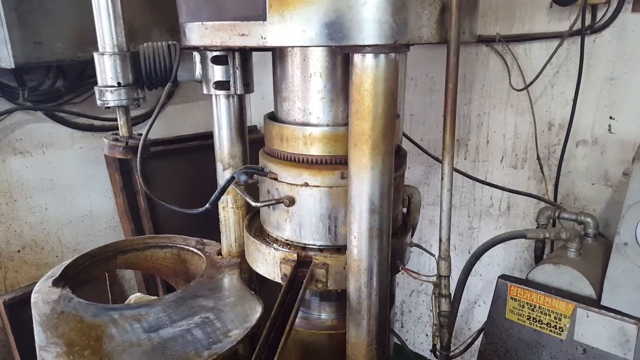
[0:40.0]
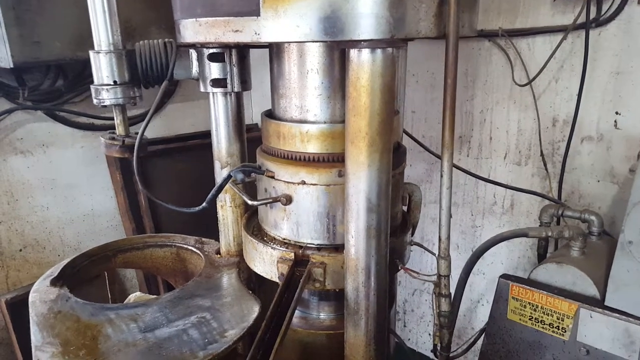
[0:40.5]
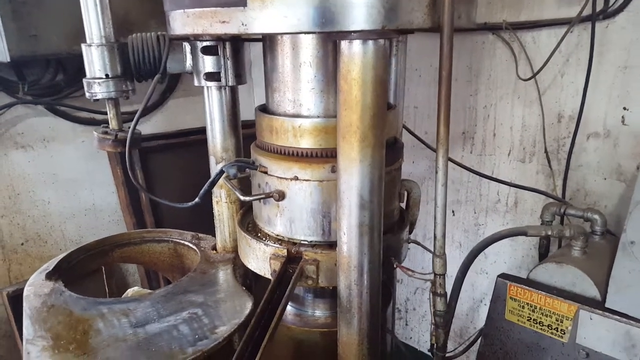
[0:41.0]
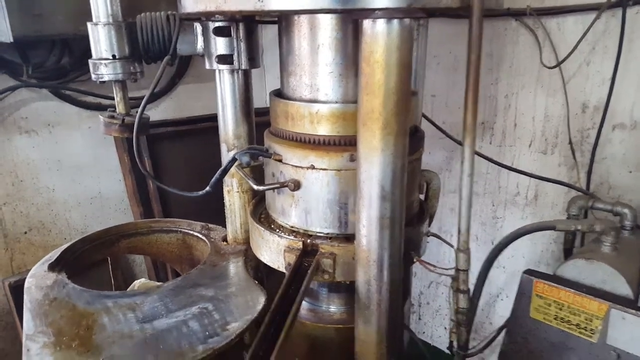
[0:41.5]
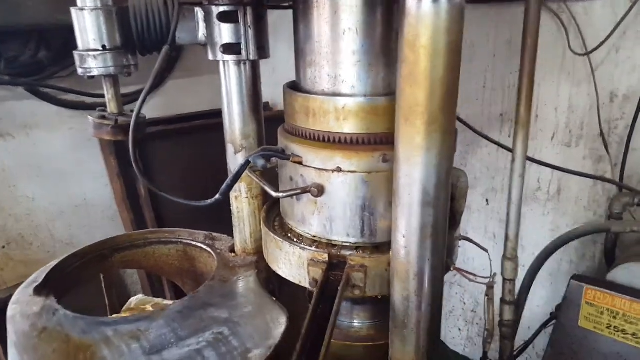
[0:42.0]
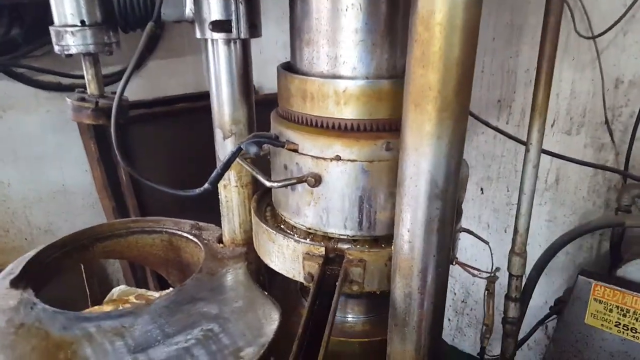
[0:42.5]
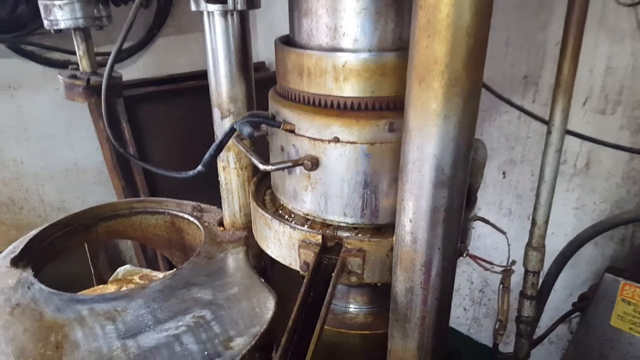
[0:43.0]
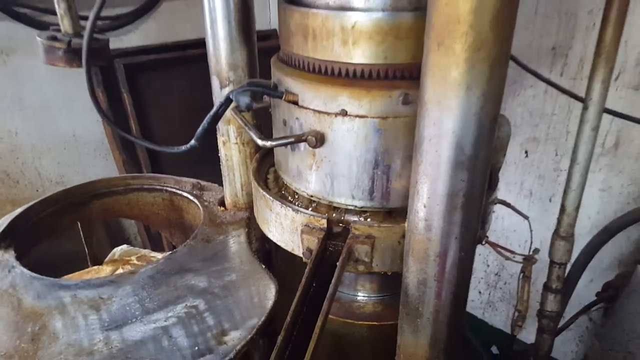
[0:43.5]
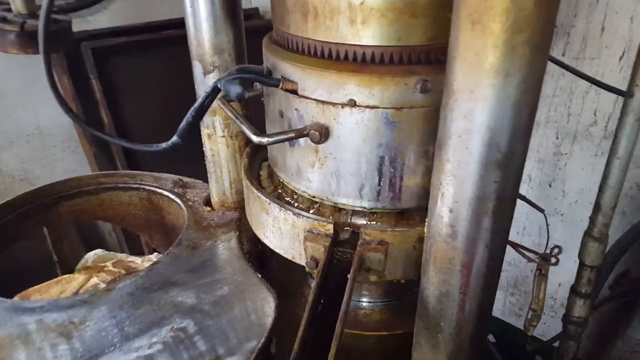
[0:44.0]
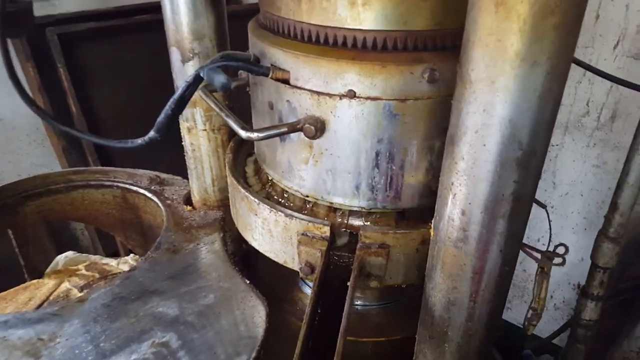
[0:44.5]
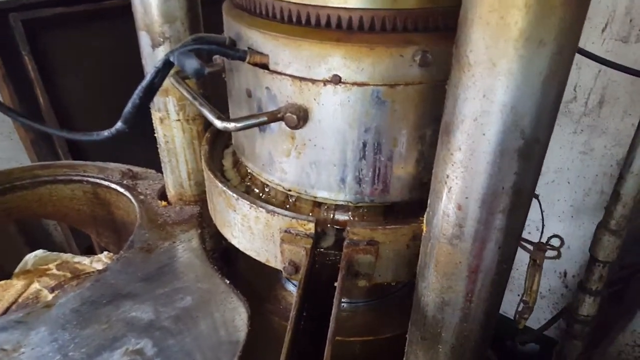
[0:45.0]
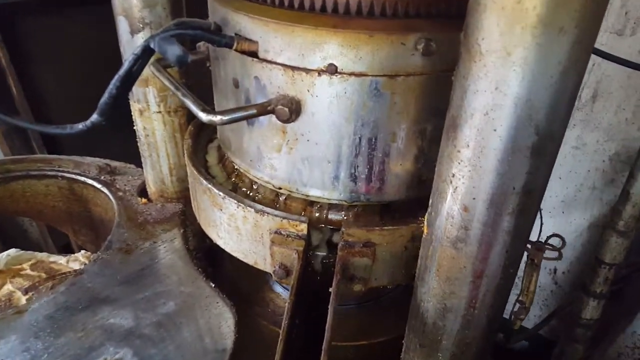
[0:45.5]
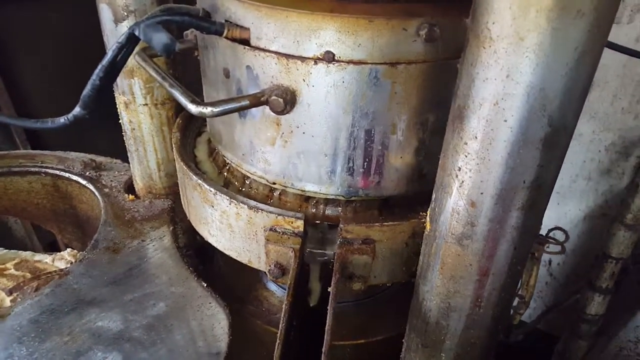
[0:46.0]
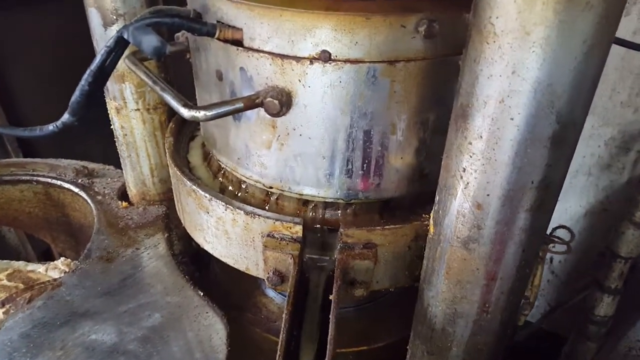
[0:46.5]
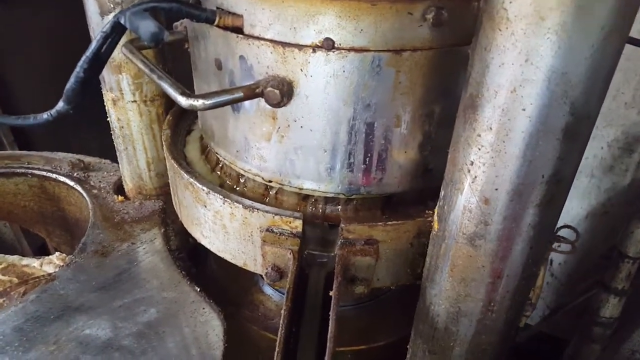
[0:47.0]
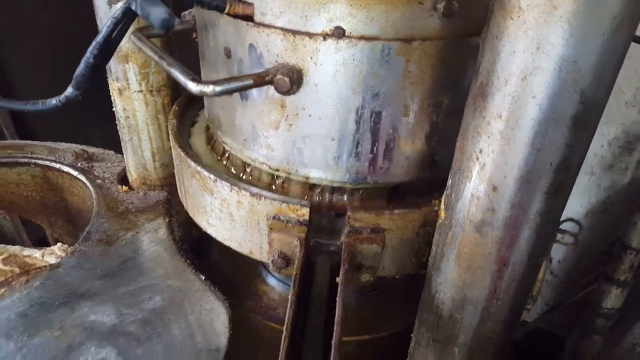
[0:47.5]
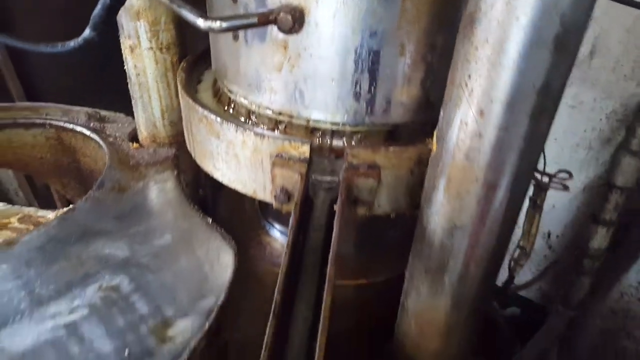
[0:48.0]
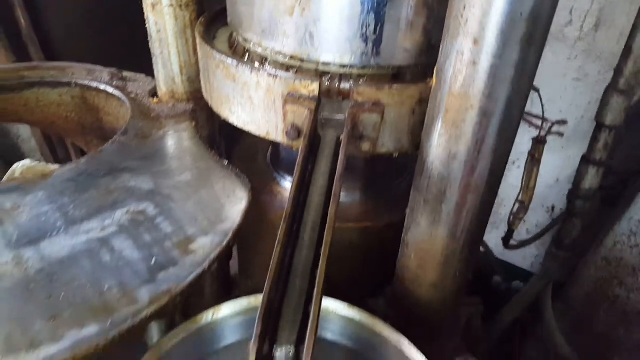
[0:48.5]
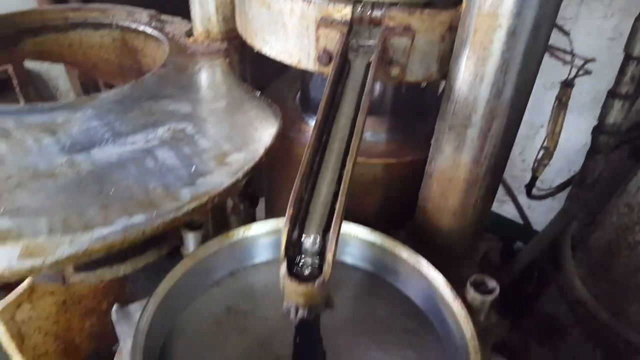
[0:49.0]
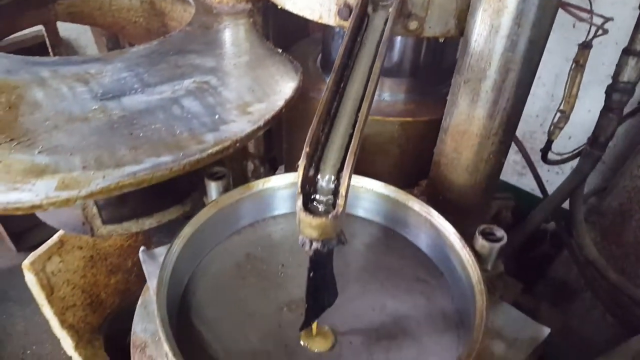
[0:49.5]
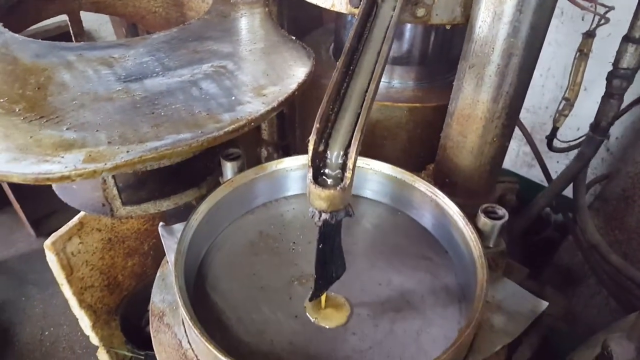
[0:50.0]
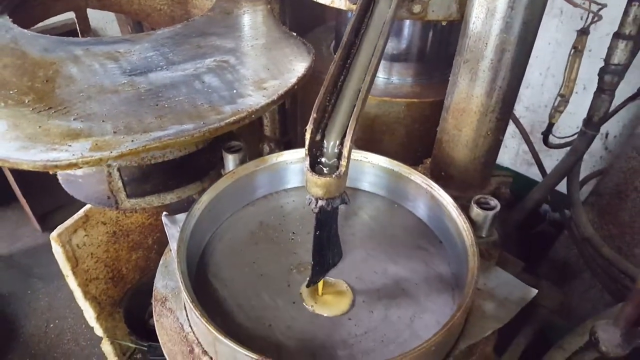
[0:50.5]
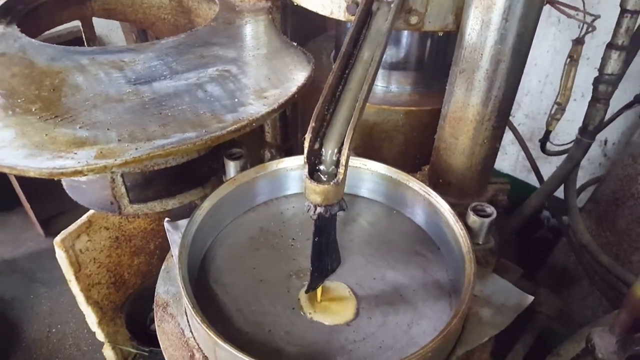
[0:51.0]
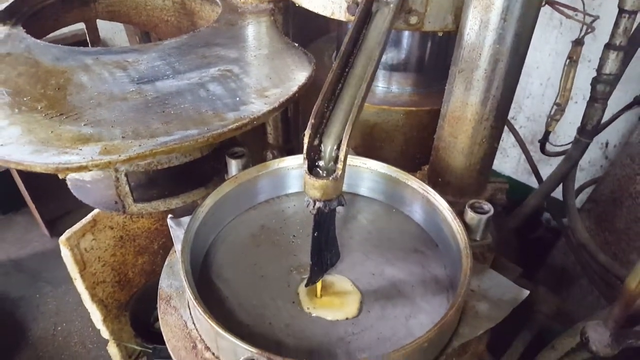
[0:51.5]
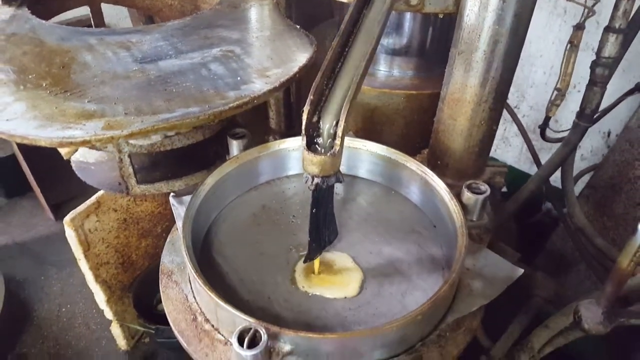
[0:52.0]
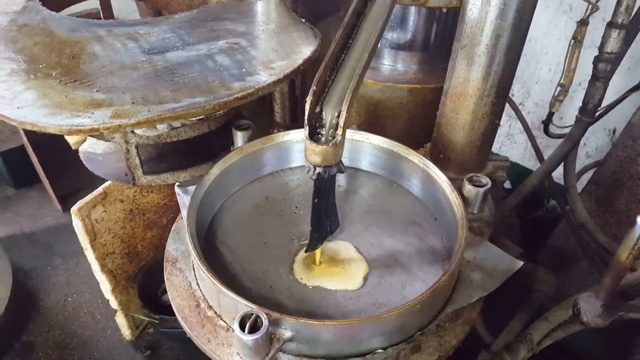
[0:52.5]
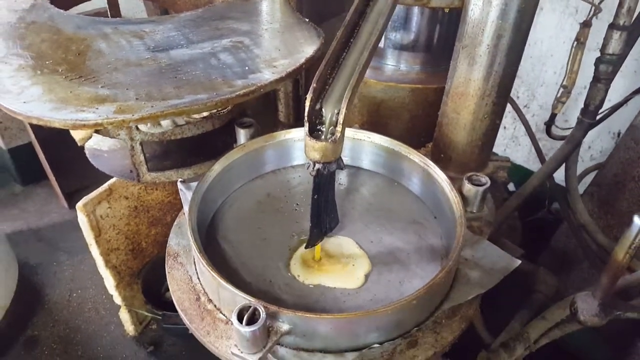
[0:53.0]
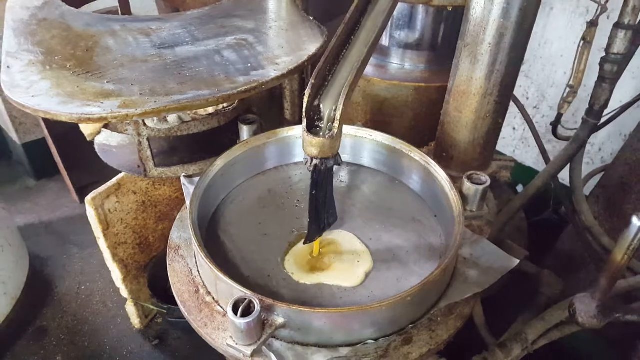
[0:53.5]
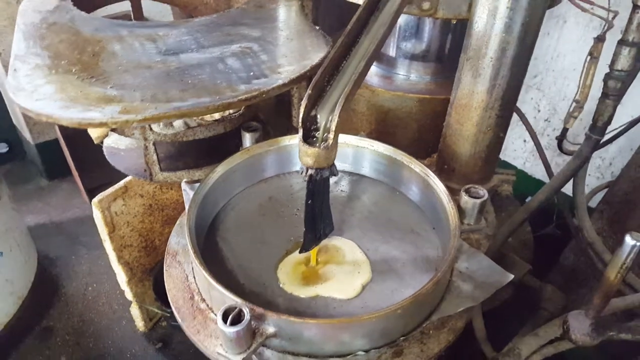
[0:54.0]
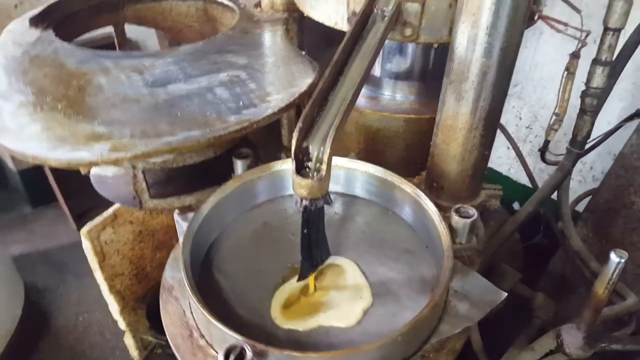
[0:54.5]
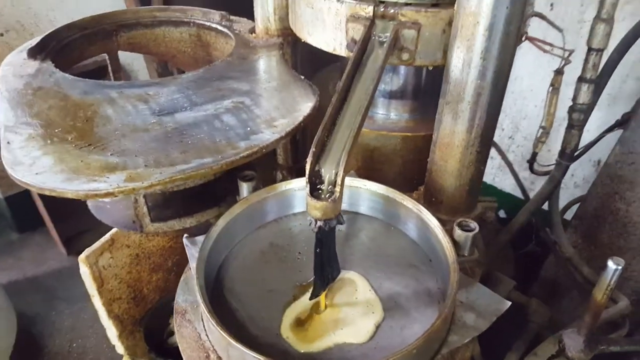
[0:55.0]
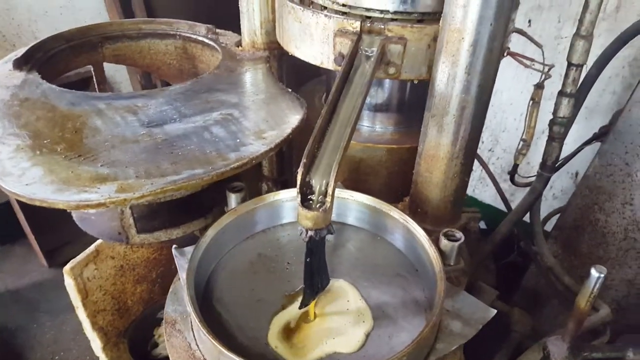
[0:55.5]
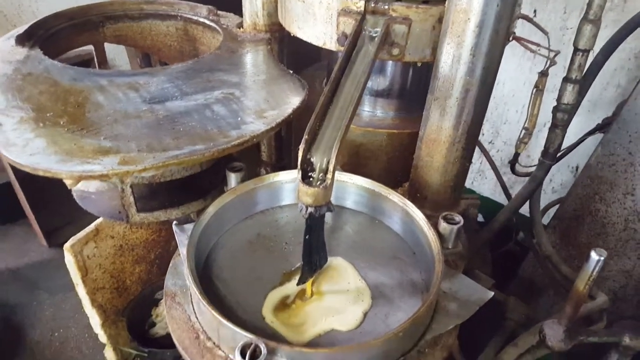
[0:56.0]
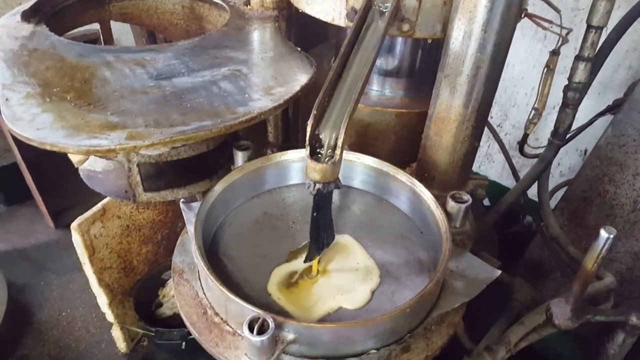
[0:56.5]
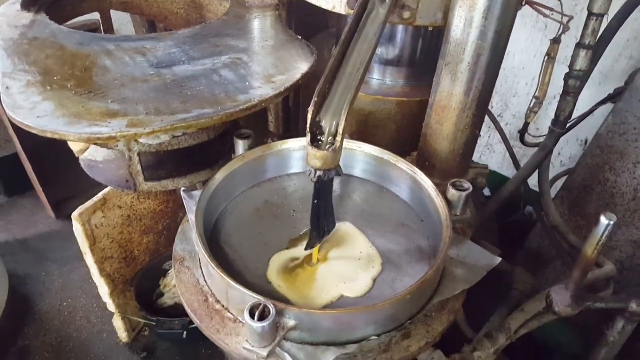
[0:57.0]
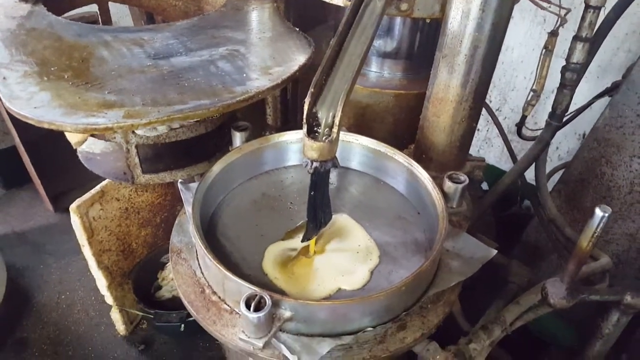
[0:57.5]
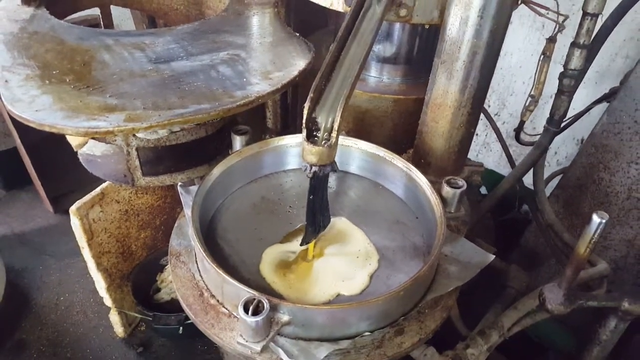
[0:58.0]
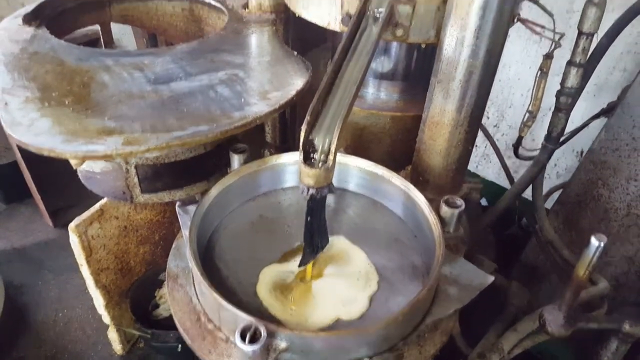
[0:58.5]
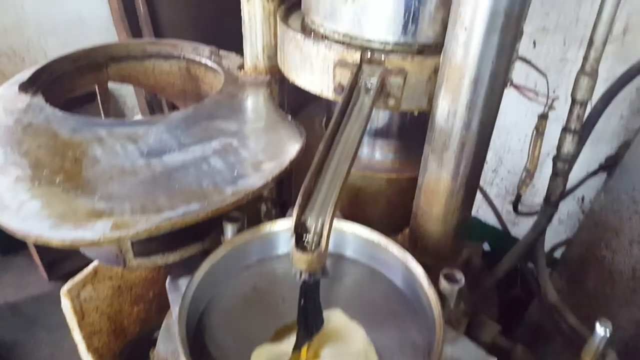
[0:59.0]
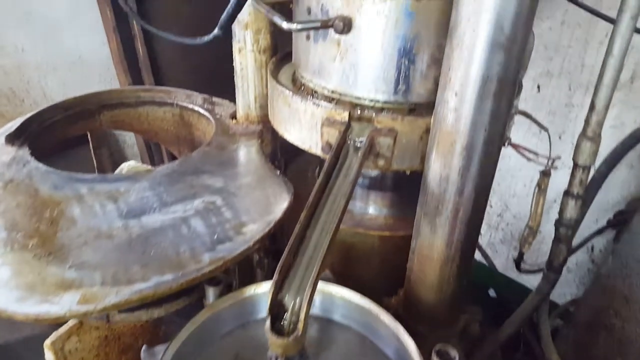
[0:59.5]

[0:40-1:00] From the close-up shot of the piston, the camera begins zooming in and shows what appears to be liquid coming out of the bottom. The liquid flows down the piston and into a small irrigation canal connected to the front of the piston, then drops off the canal into a small receptacle below, towards the front of the piston and lower down. The liquid is amber in color and becomes very foamy as it falls into the receptacle. The receptacle is metallic and bowl-shaped, with the same appearance as the piston itself. The camera shows the liquid collecting in the receptacle for a few moments, then pans back up to the piston where the liquid is coming from and begins zooming back in.